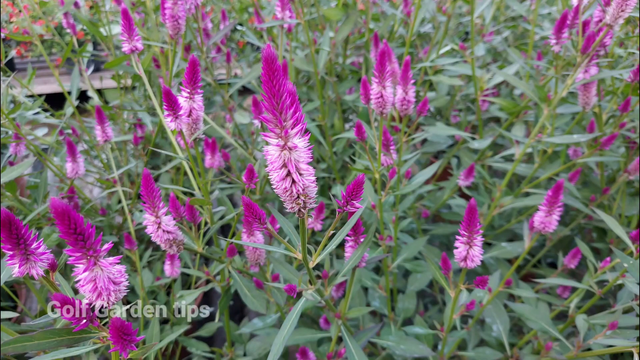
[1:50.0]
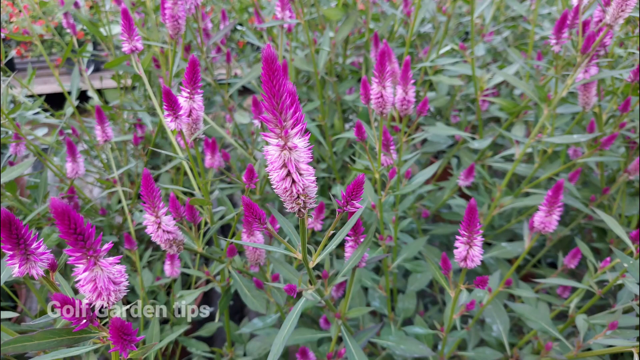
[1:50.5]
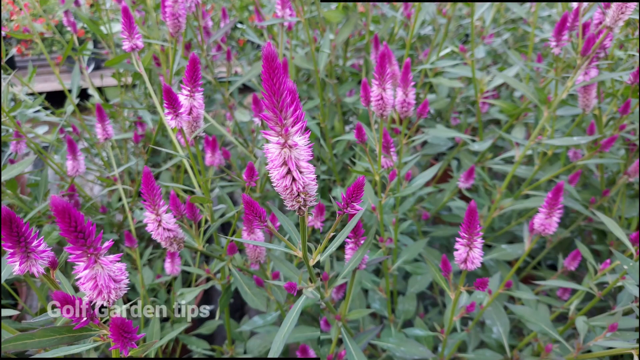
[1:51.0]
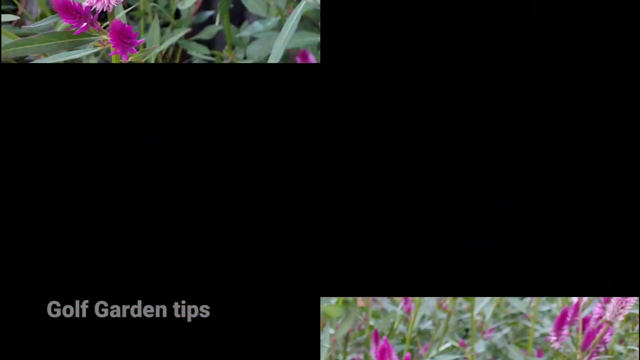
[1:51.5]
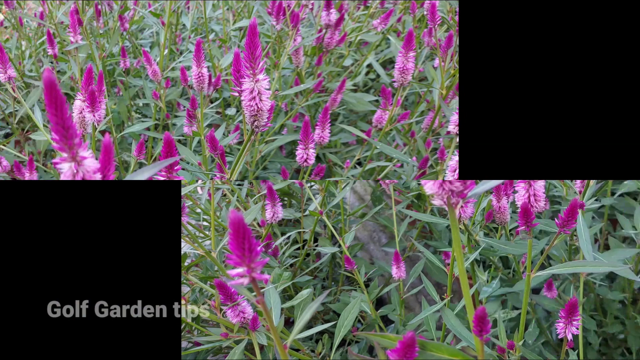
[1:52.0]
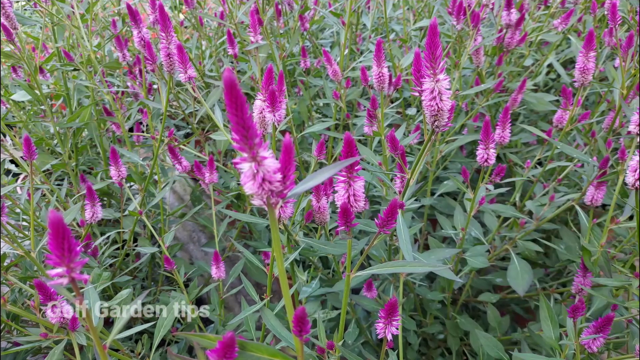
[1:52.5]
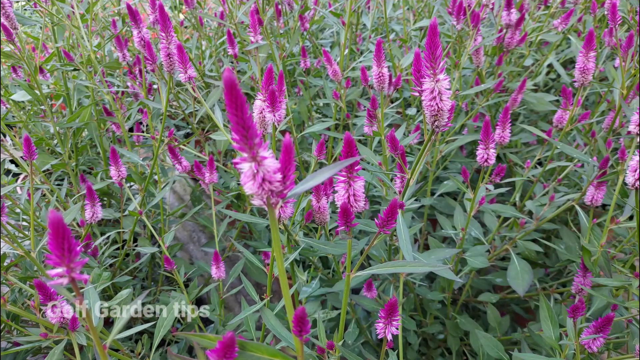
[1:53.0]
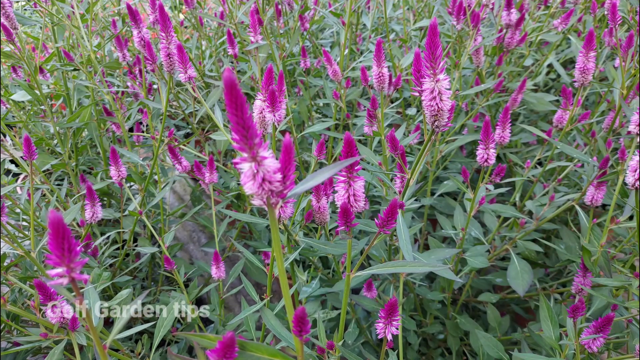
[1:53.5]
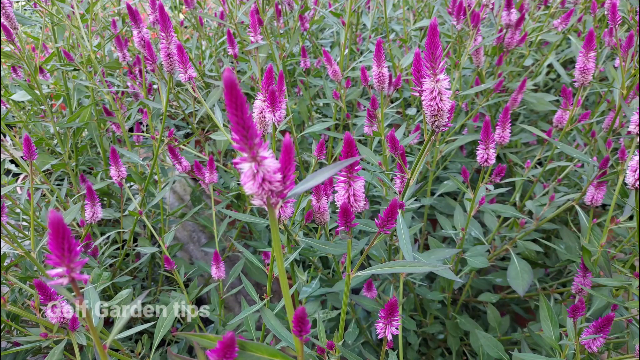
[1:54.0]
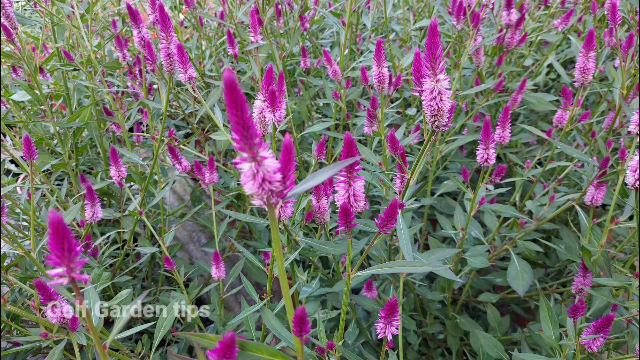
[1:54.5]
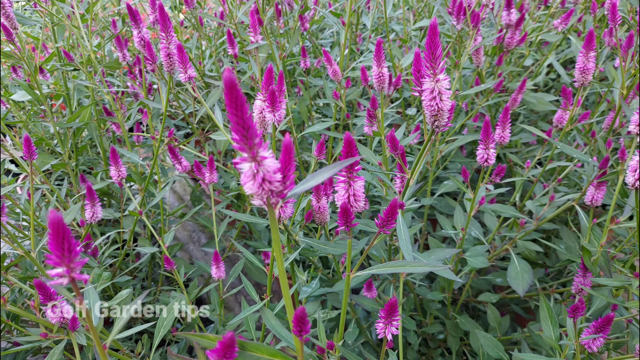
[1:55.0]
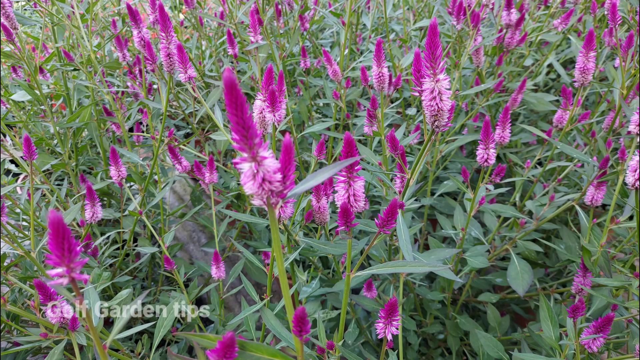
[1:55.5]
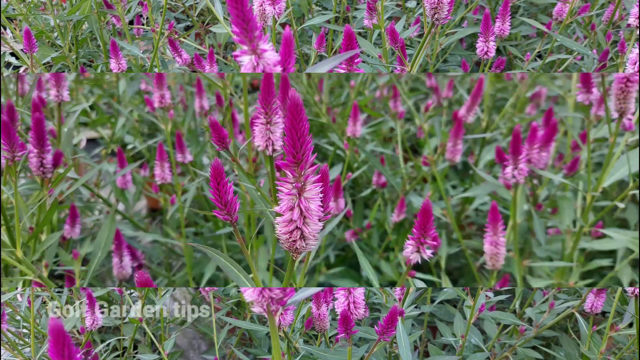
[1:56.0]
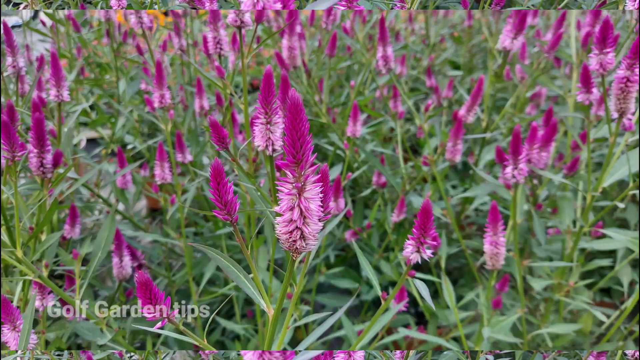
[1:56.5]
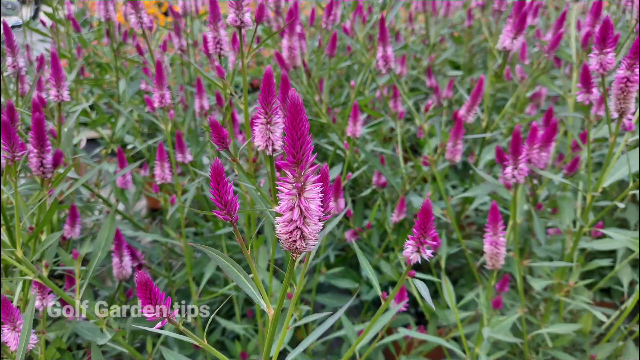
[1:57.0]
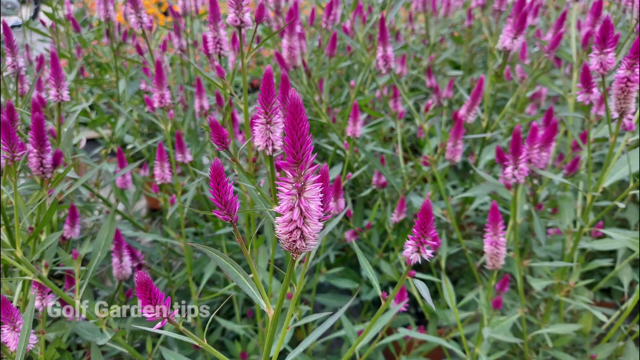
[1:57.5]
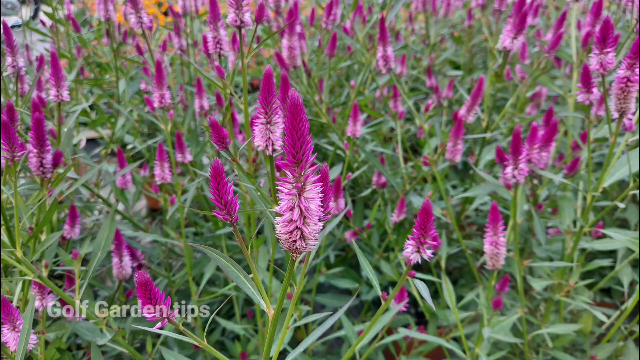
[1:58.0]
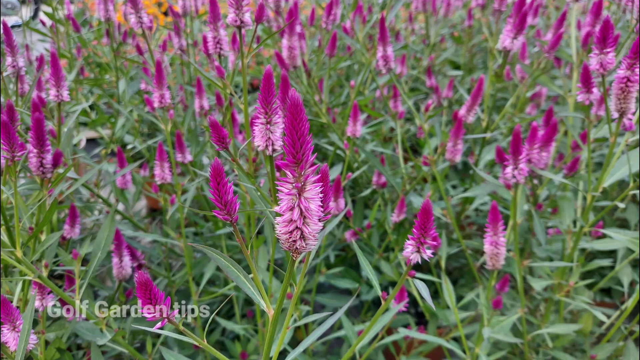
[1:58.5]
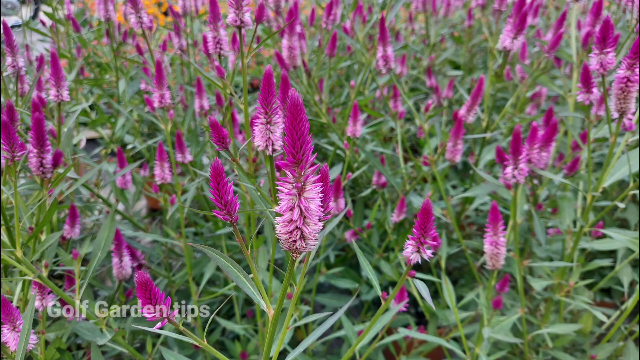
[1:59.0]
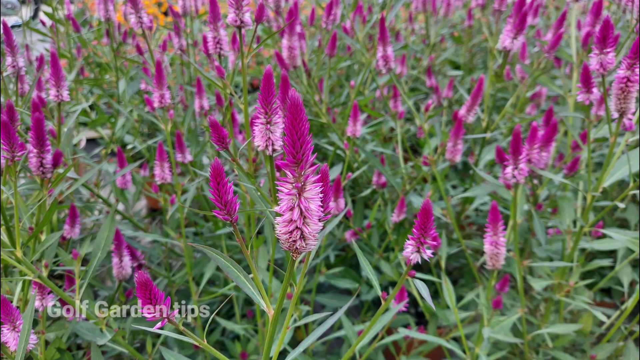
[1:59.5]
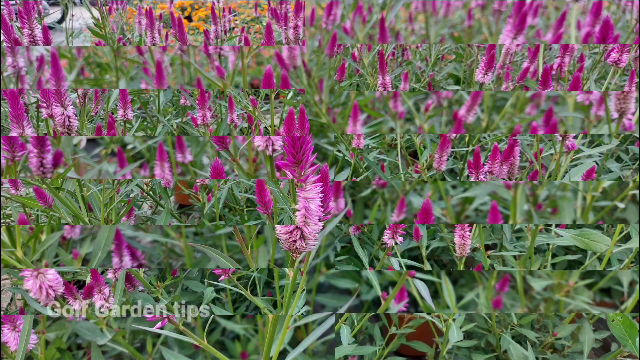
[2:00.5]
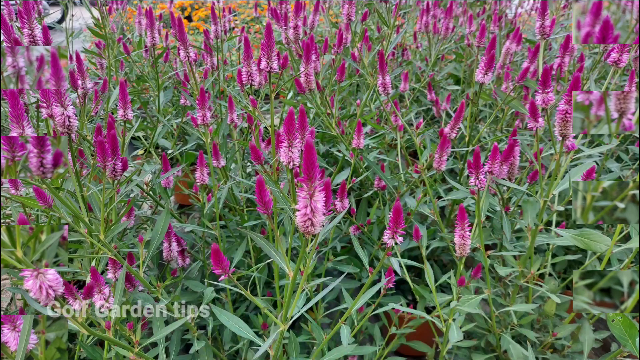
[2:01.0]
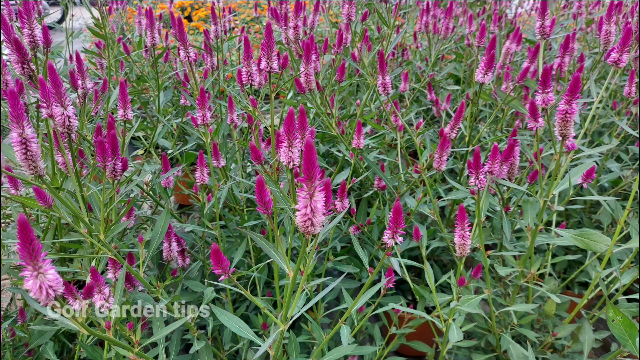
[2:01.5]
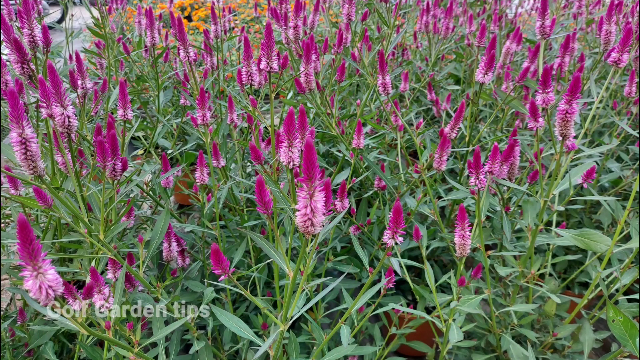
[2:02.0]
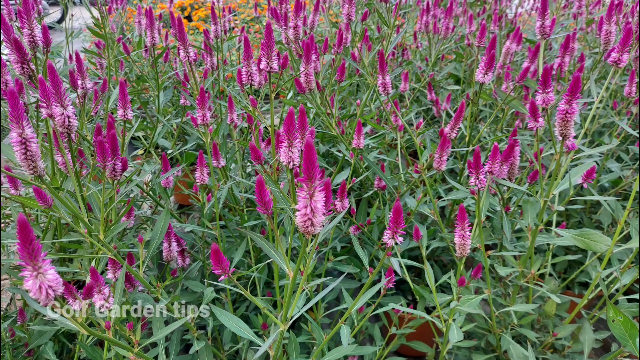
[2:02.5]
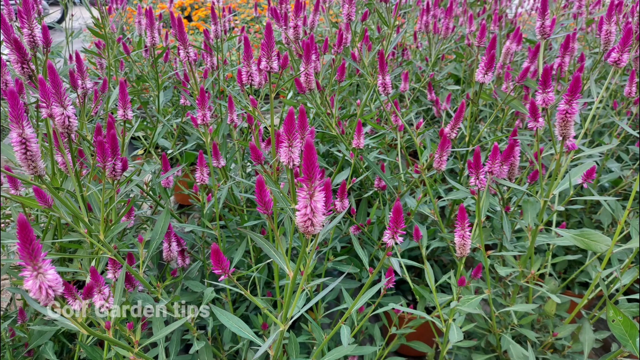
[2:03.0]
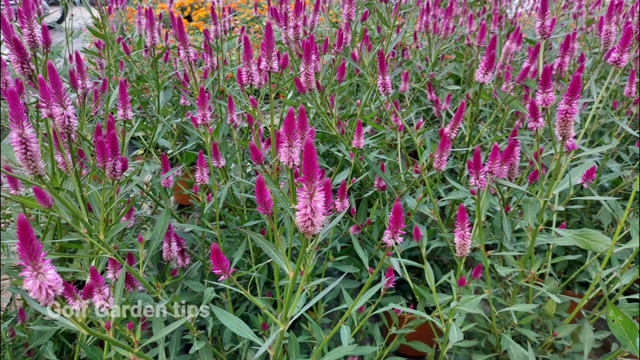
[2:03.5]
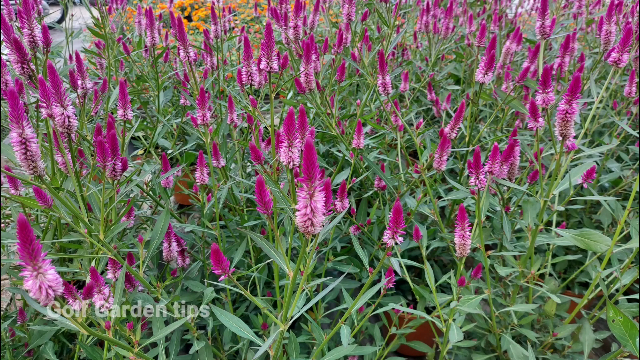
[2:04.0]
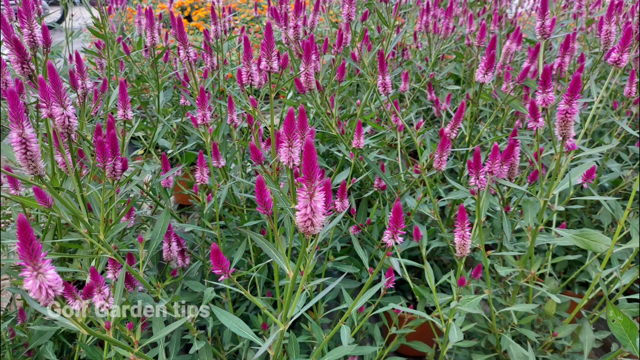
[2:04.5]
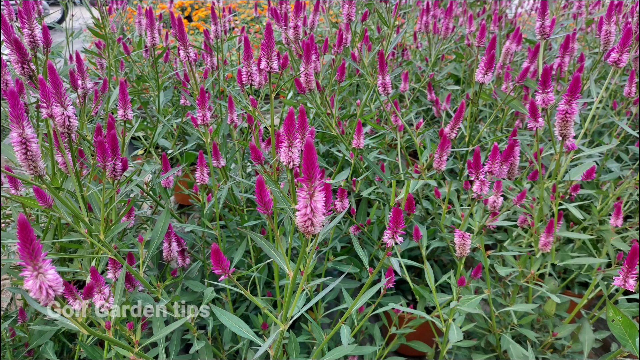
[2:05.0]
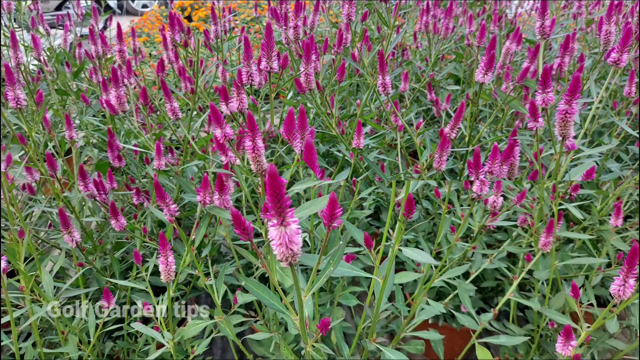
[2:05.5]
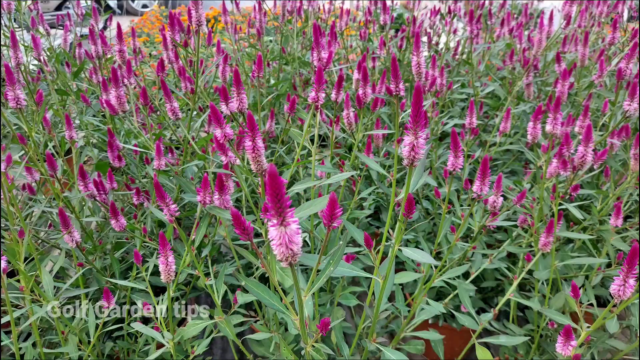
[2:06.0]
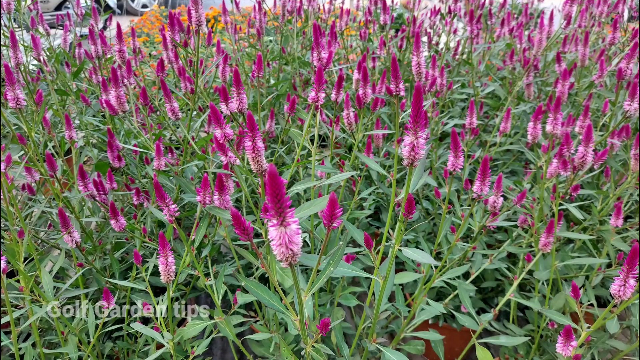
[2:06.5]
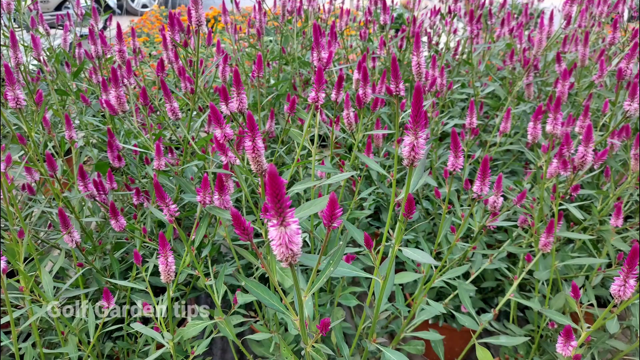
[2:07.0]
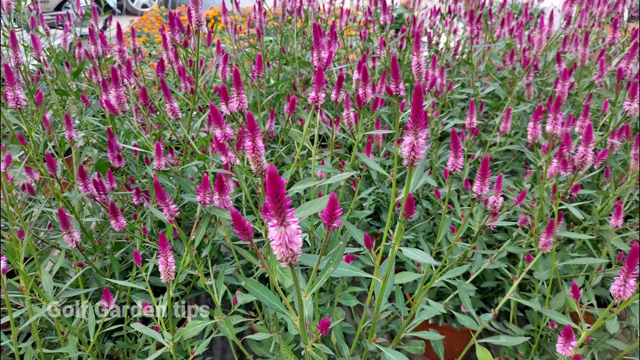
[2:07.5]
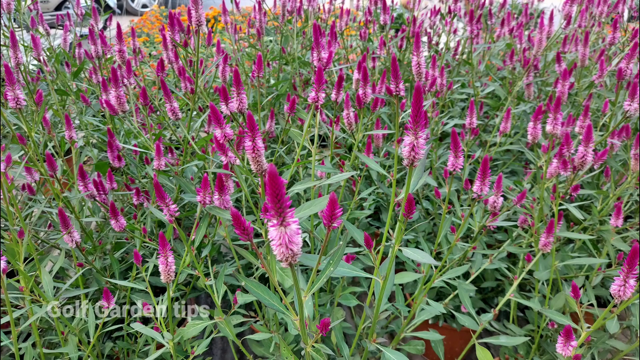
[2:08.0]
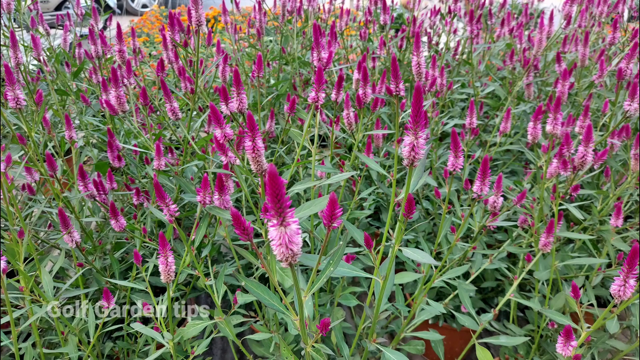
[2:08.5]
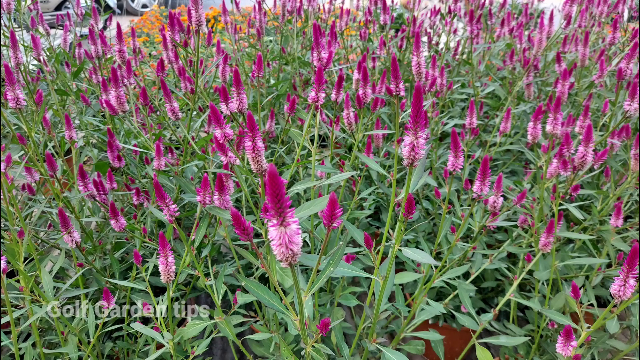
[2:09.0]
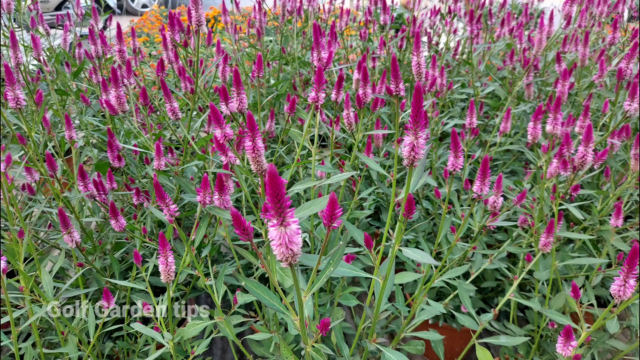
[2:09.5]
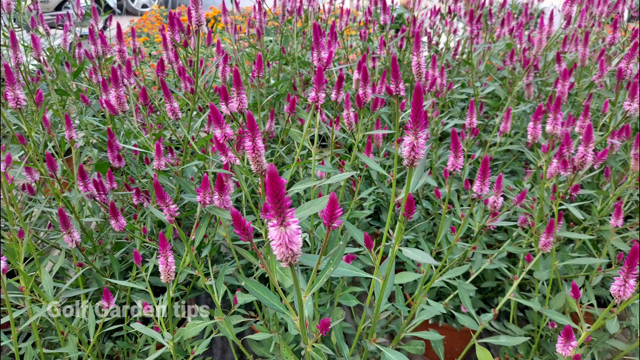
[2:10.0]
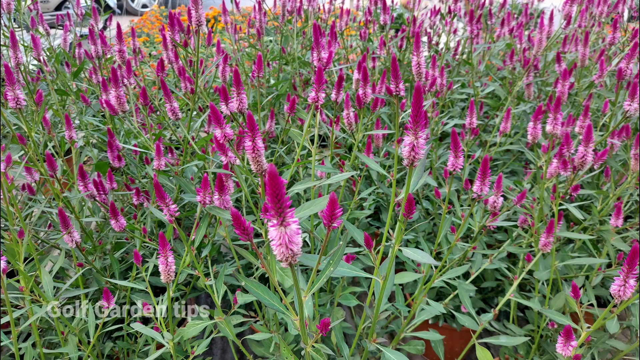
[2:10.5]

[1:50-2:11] The person shooting the video holds at the end and zooms in on the buds of the plant before another slideshow starts, with the same photo-booth-style wipes: photos wipe from side to side and up and down as they come in and out of the frame, before finally zooming in on the buds. The photos then stop and the video moves on to another section. Marigolds appear in the background along with the street and possibly the wheel of a bicycle in the far background. Zooming back in shows the second layer of smaller buds growing at the base of the main plant. Pulling back out shows the tips and the colors of the petals, which start out pink and move into a deep pink, almost fuchsia, ombre effect. The buds are long, longer than they are wide, with the petals very tightly packed. The plant grows in all different directions, and each pot has what looks to be 50 to 60 buds. The little girl has gone out of frame, and the camera finally pulls out and the video closes on a final photo.